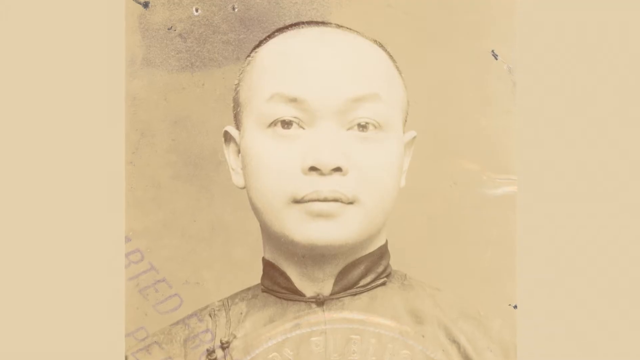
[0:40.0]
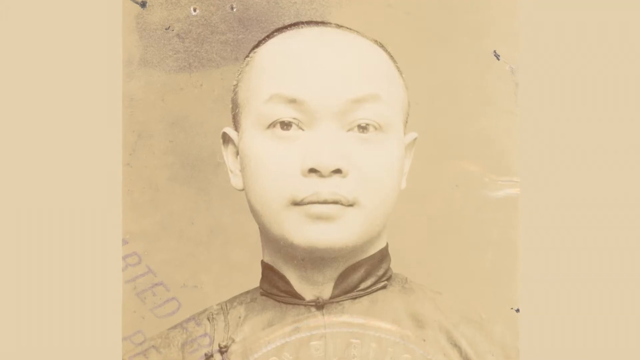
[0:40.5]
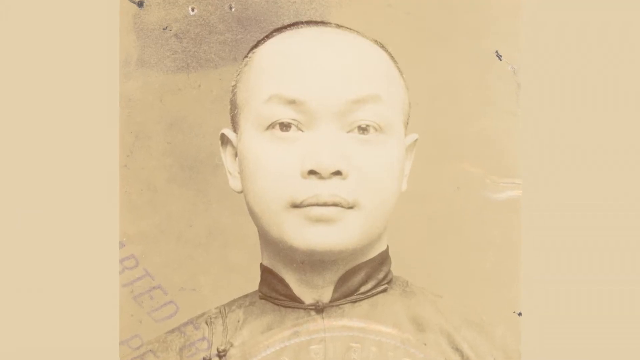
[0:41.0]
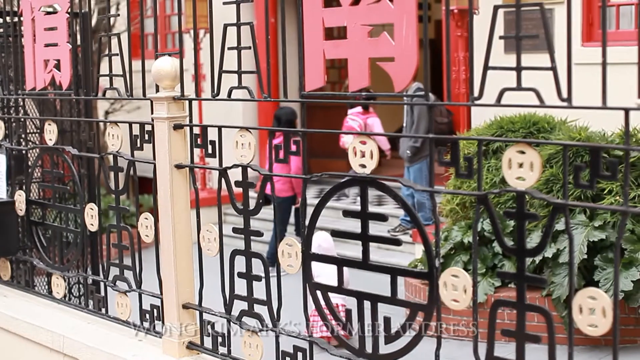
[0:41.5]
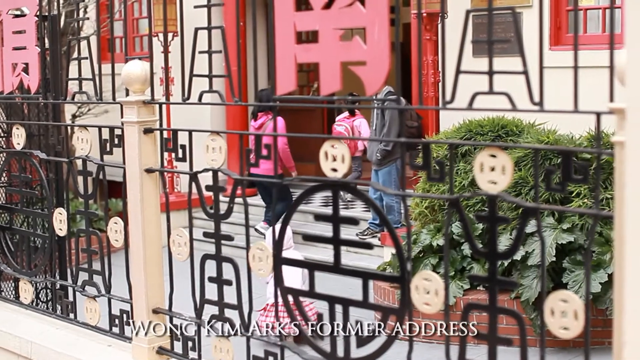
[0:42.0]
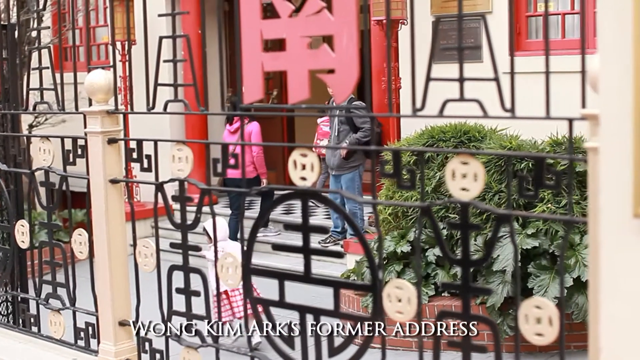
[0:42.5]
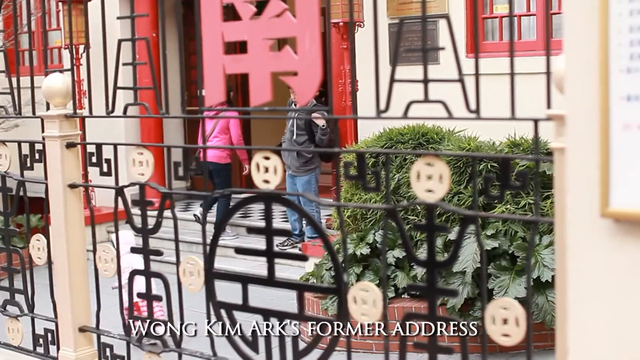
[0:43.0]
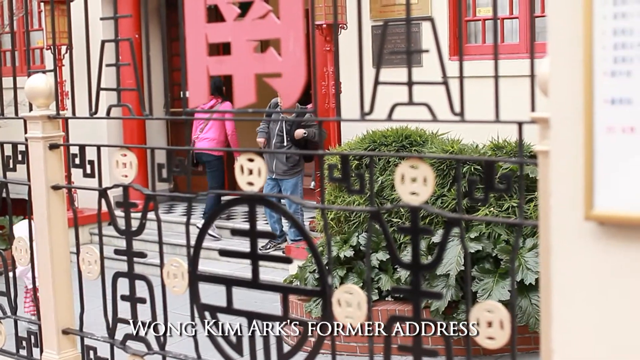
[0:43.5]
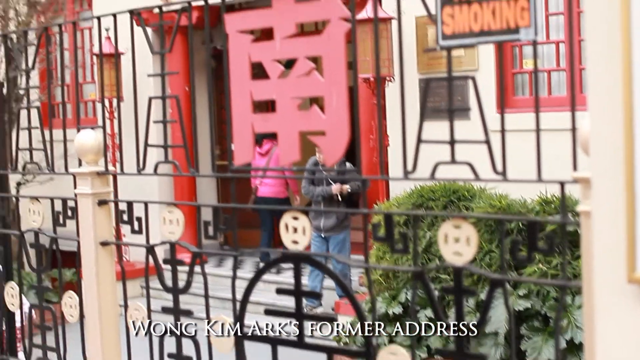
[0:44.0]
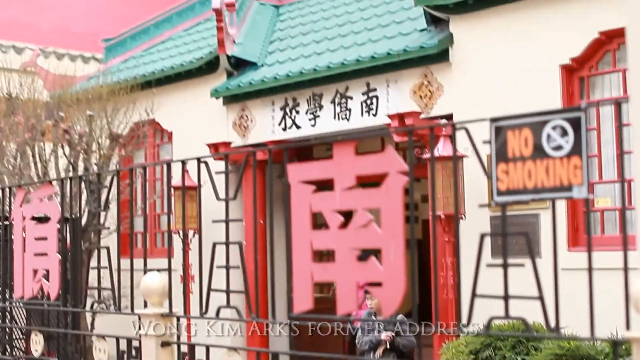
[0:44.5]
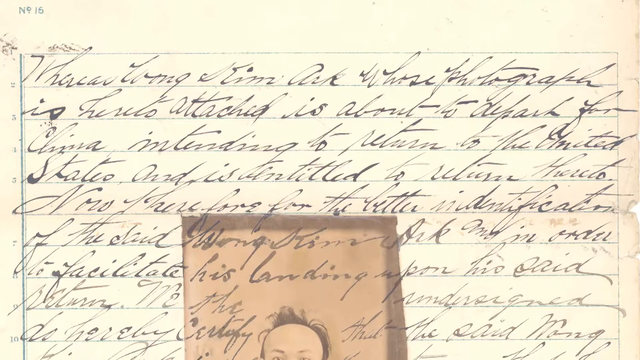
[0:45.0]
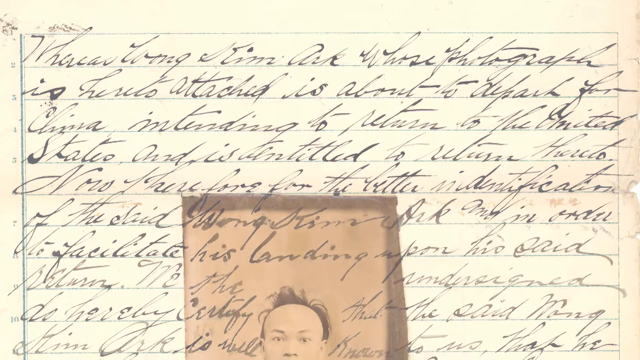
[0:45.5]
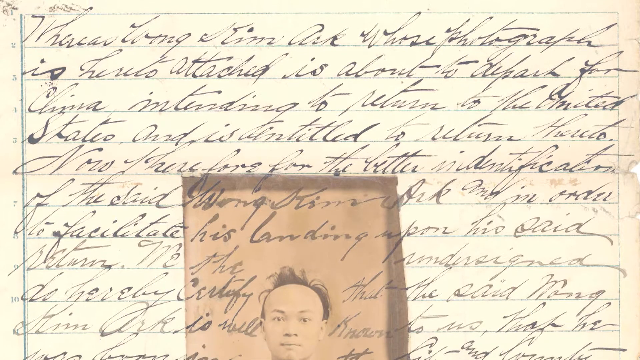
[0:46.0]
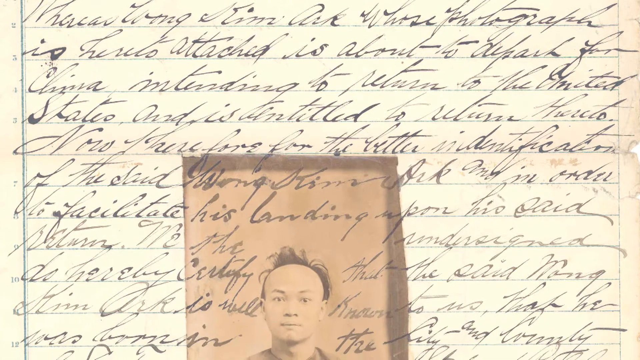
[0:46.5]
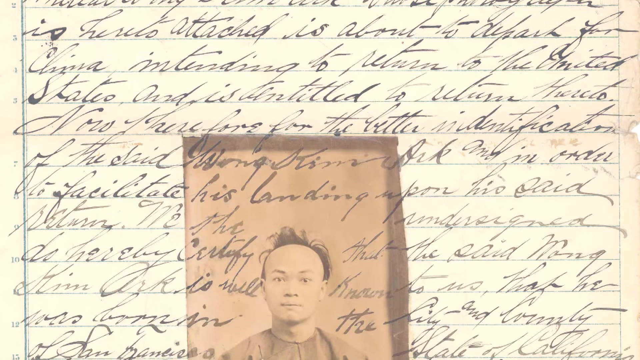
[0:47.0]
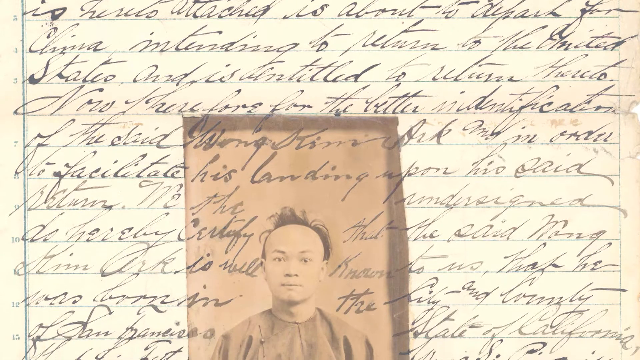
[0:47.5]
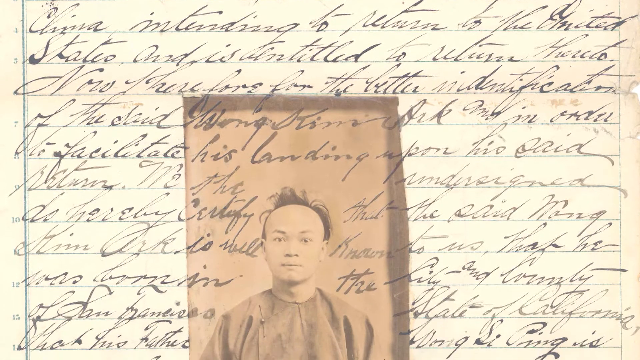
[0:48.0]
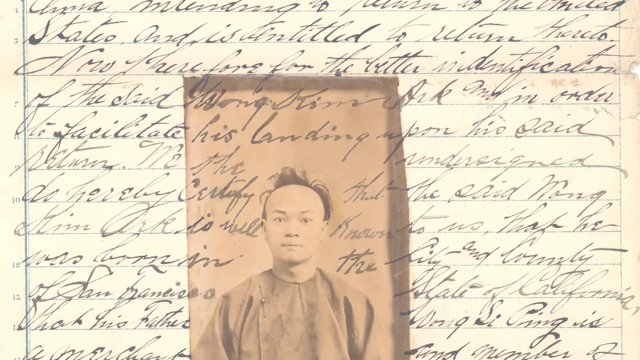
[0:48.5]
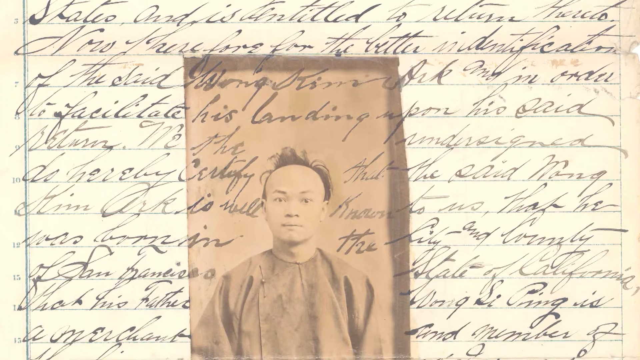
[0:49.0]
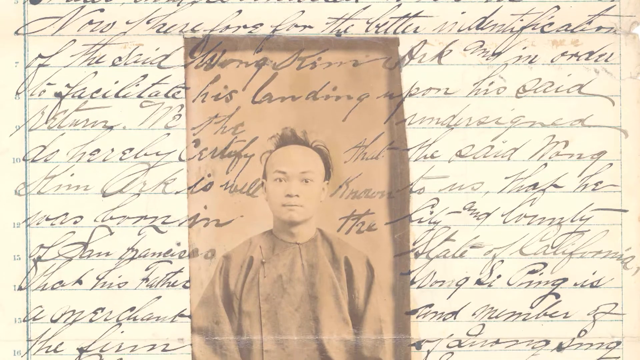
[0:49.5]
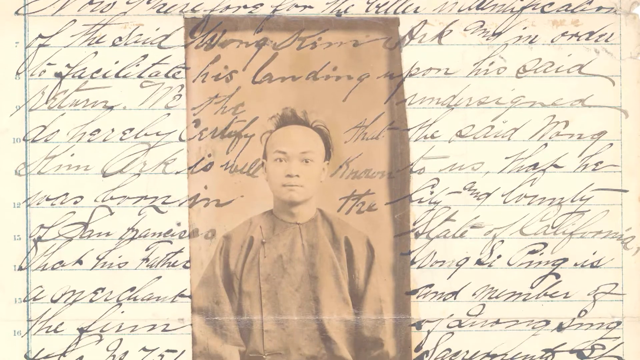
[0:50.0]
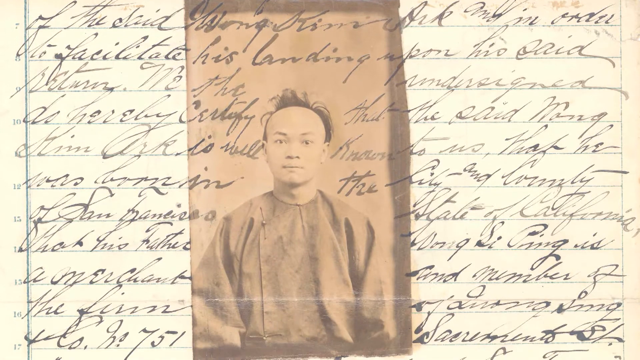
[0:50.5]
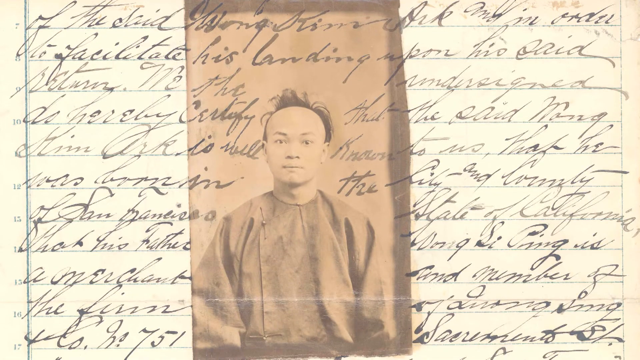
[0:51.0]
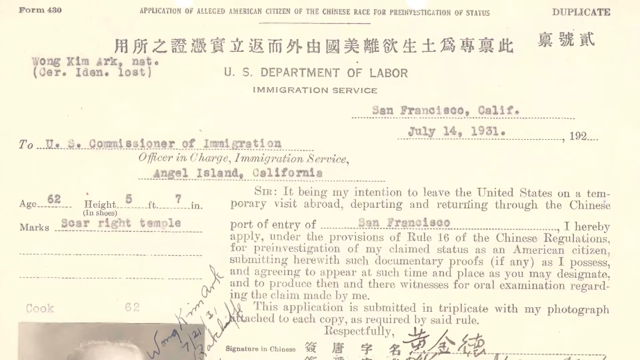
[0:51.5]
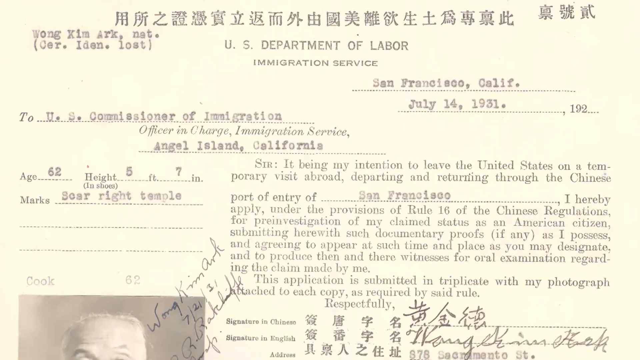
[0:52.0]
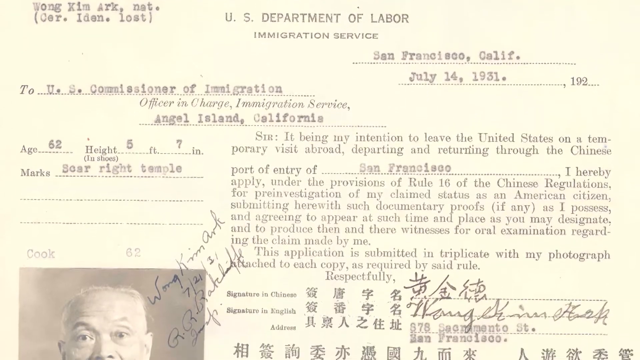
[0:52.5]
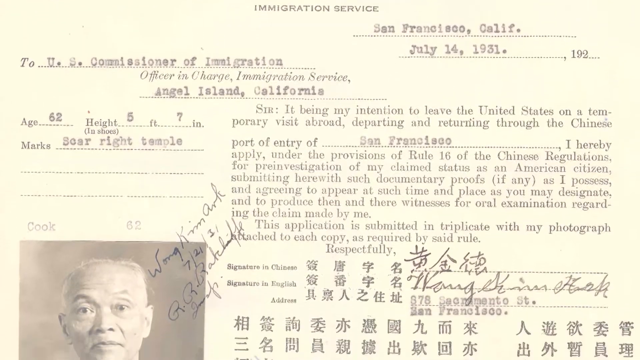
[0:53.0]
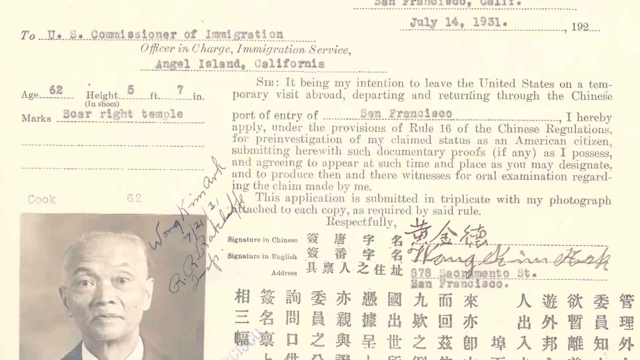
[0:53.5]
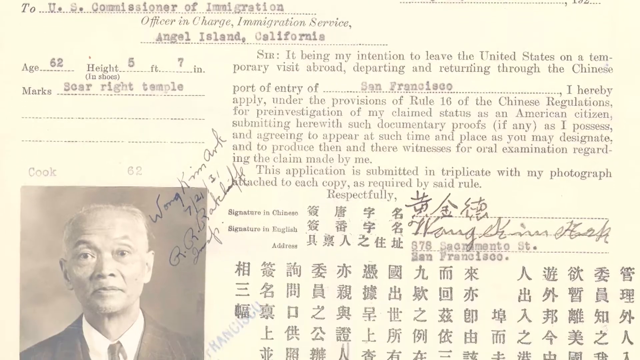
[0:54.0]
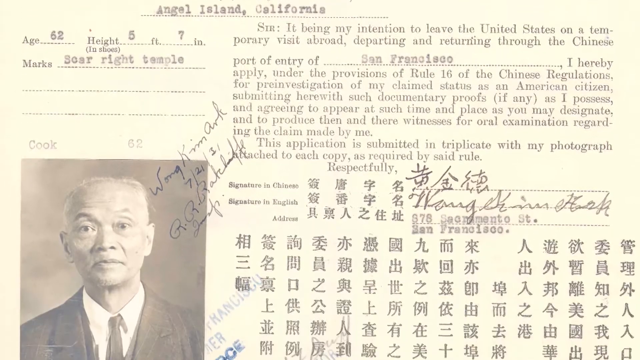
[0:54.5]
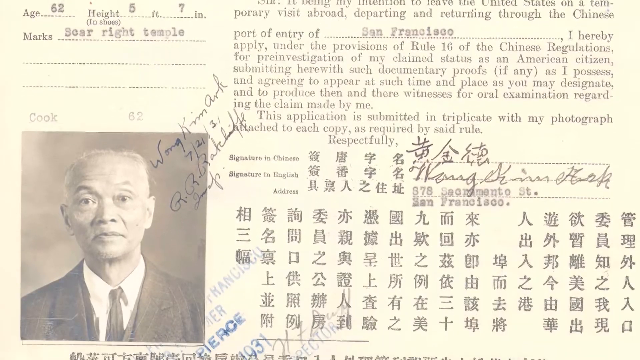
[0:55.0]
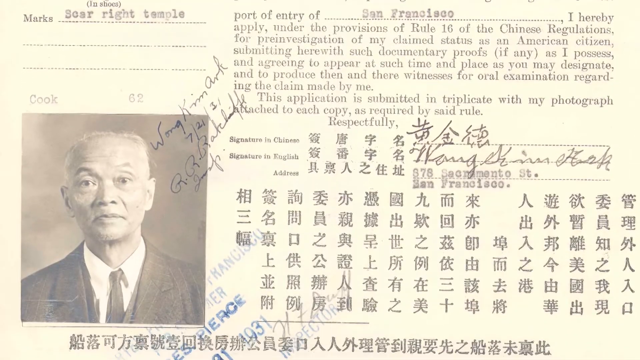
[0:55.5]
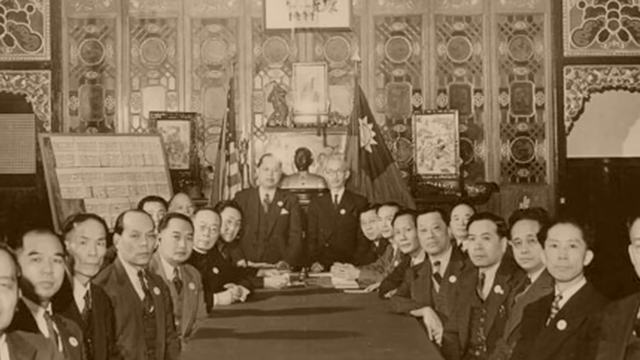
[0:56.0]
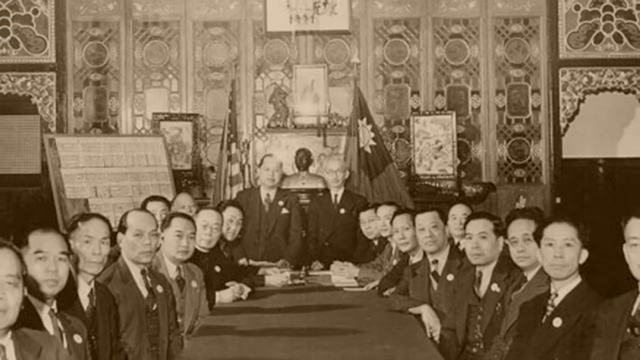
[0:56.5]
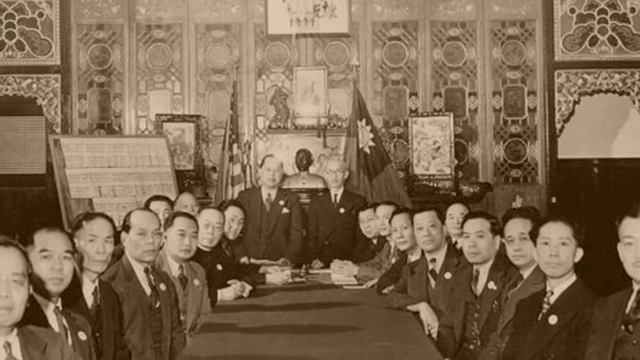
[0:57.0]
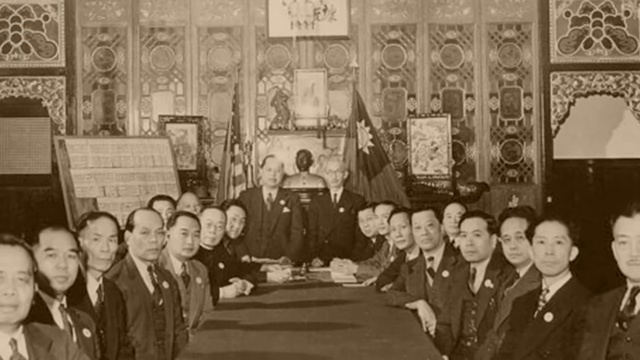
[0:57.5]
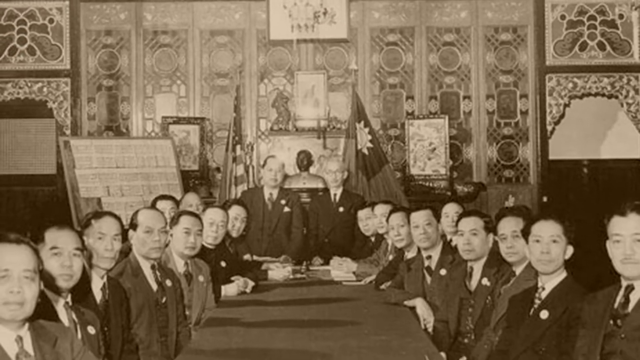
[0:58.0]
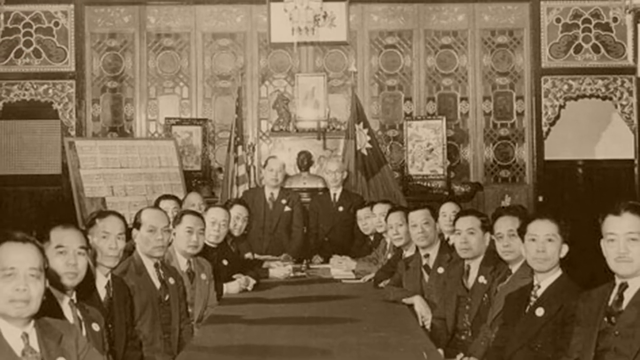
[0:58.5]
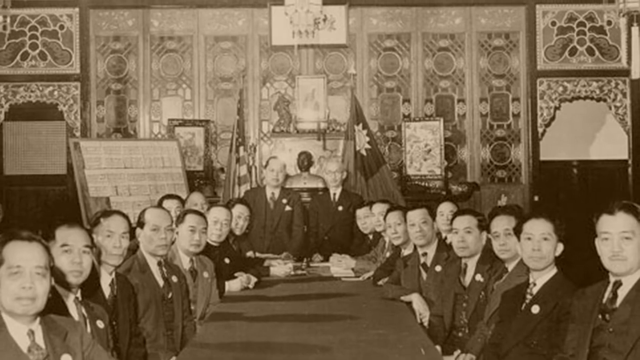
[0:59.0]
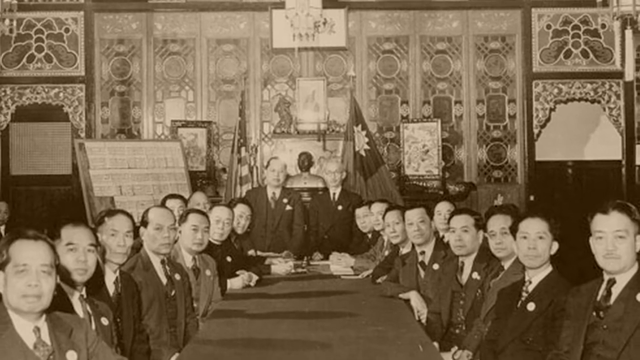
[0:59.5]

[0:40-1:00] What looks like an old photograph shows an Asian man in traditional clothing with very short hair. His expression is indifferent but more happy than sad or angry; he looks hopeful. The video switches to children walking into a building. Two of the children are girls, both wearing pink tops, and one has a pink backpack. There appears to be a boy standing by the doorway, with a black backpack on his back. The building has a green, Asian-looking traditional roof. Next comes a document with cursive text that cannot be read, with an image of another Asian man superimposed over it. His hair is a little disheveled, he looks a little perturbed or scared, and he wears traditional Asian clothing. The video then switches to what appears to be a U.S. Department of Labor, Immigration Service document dated July 14, 1931.